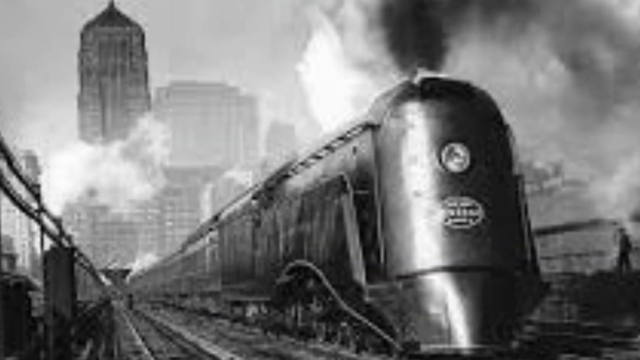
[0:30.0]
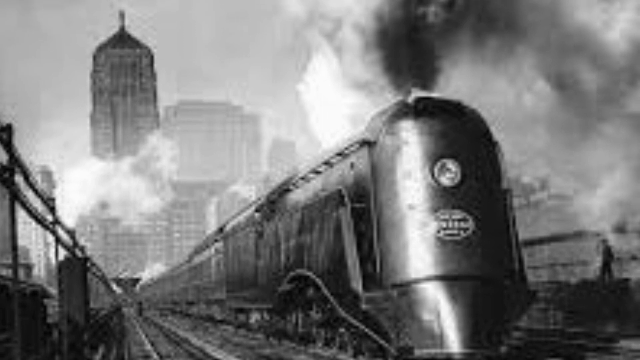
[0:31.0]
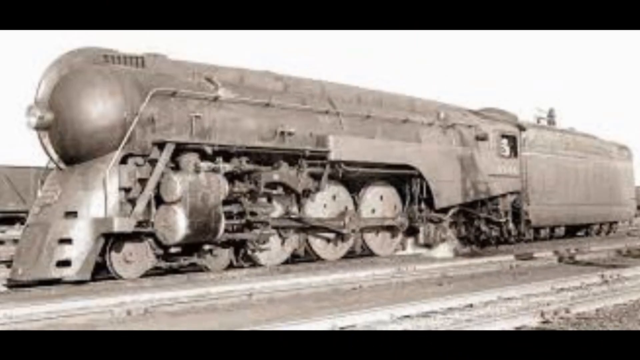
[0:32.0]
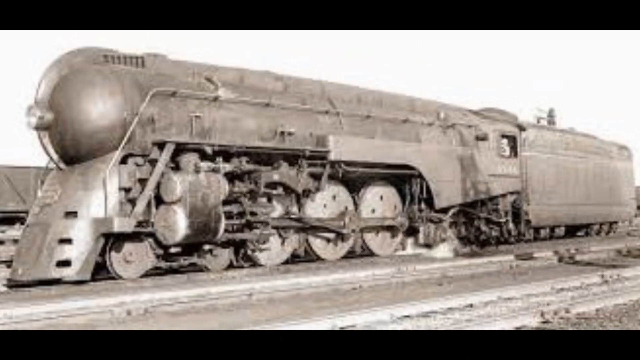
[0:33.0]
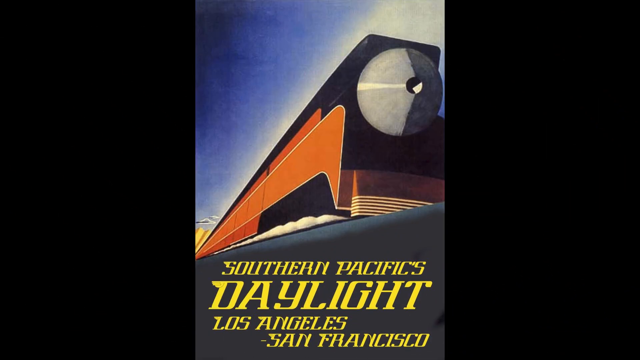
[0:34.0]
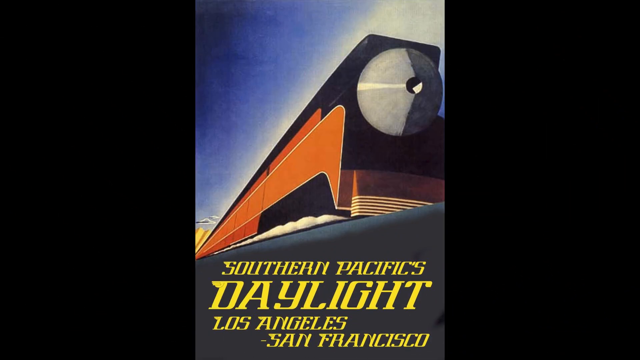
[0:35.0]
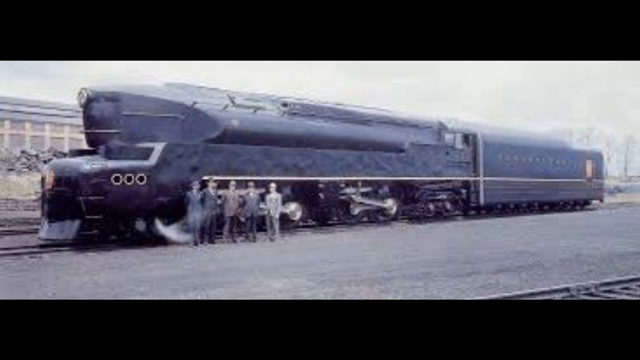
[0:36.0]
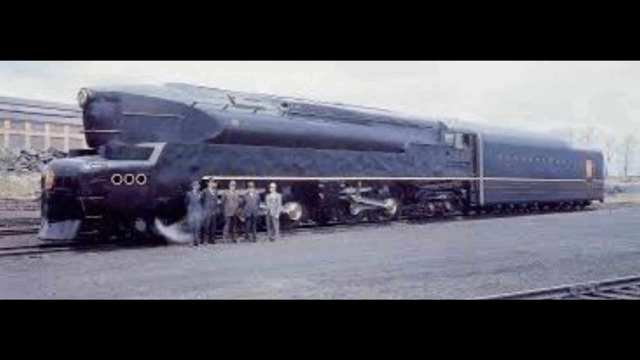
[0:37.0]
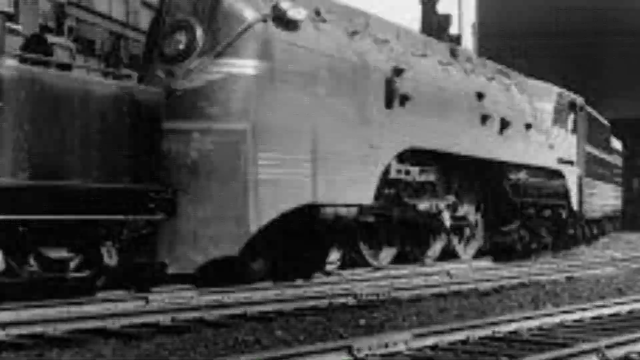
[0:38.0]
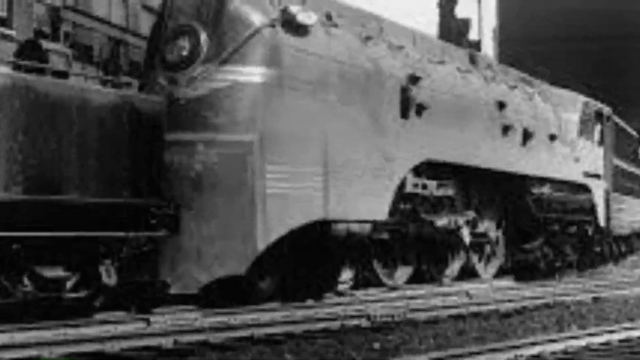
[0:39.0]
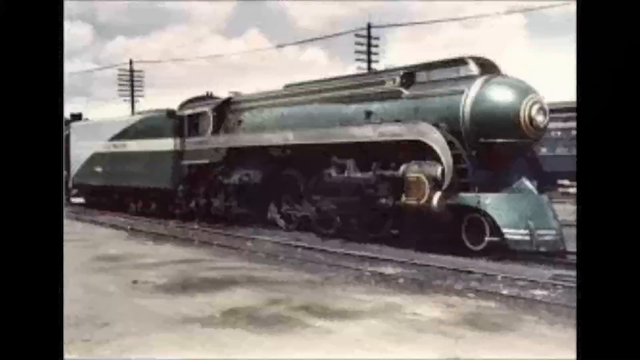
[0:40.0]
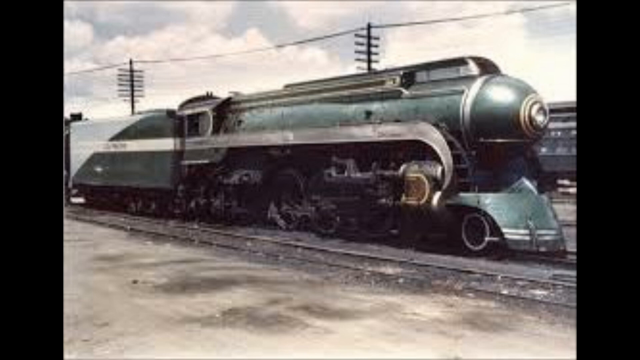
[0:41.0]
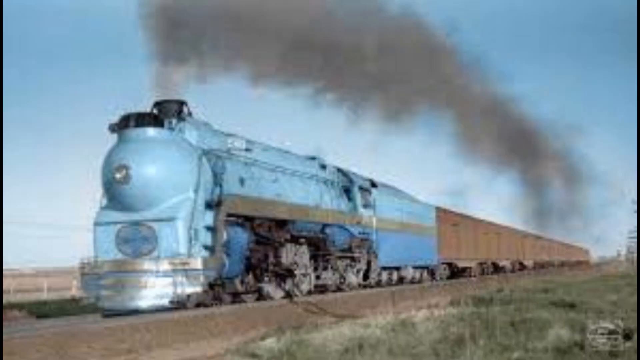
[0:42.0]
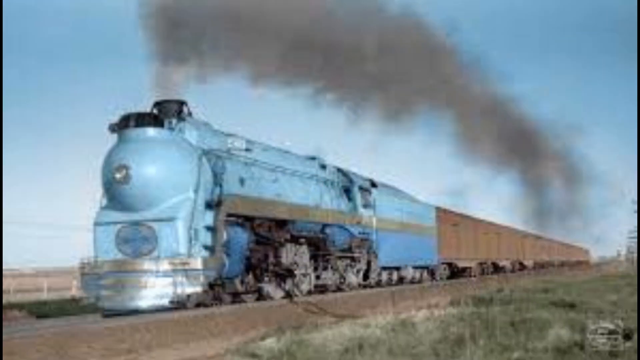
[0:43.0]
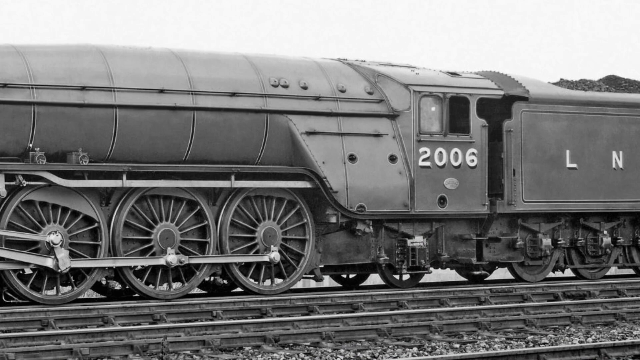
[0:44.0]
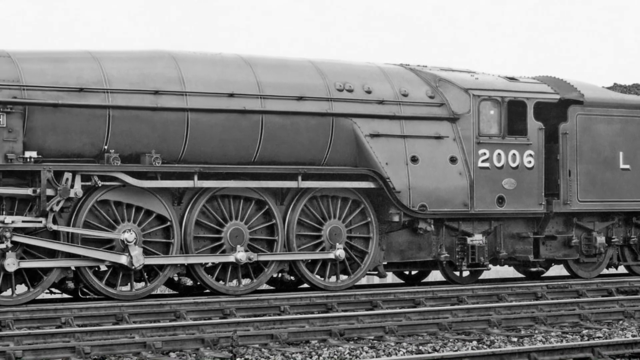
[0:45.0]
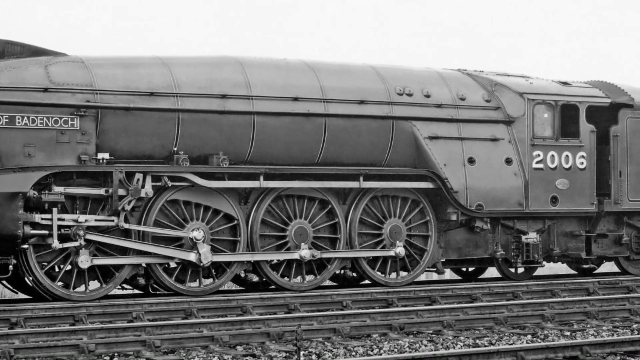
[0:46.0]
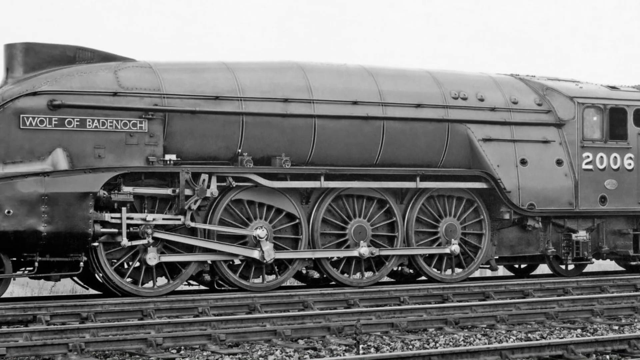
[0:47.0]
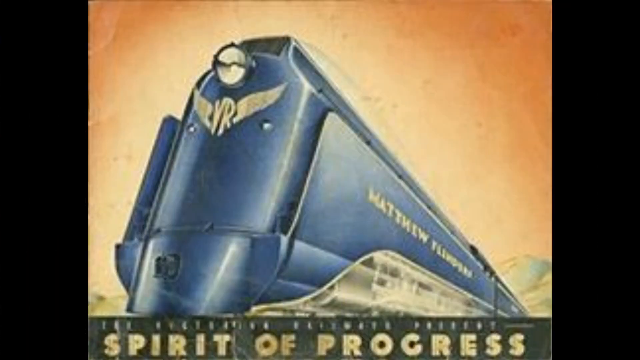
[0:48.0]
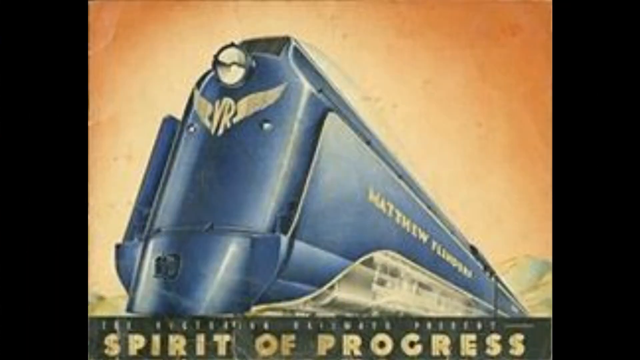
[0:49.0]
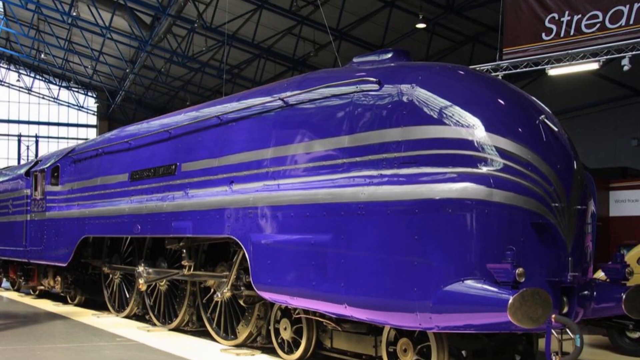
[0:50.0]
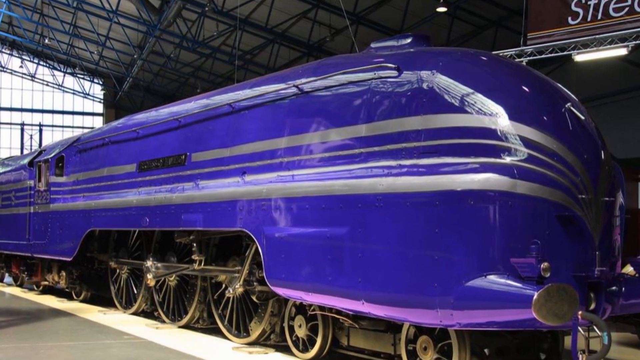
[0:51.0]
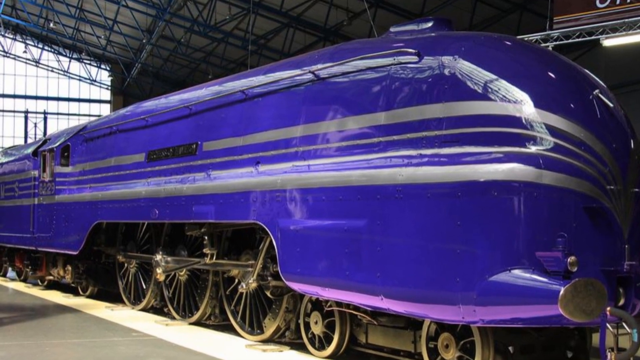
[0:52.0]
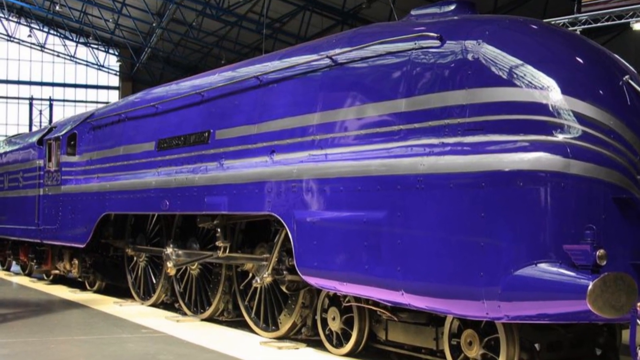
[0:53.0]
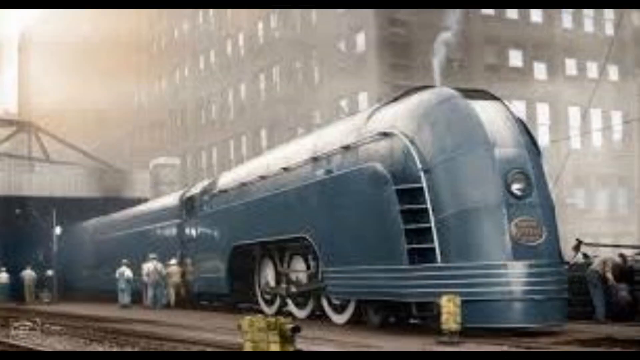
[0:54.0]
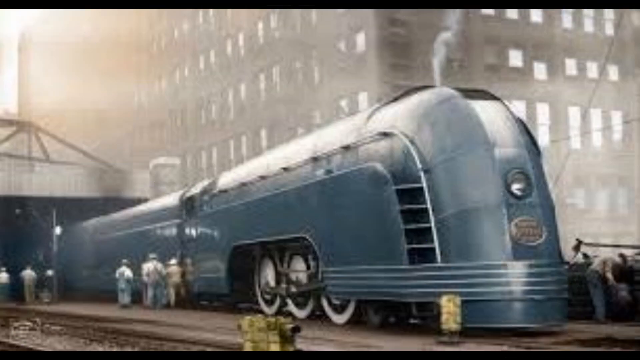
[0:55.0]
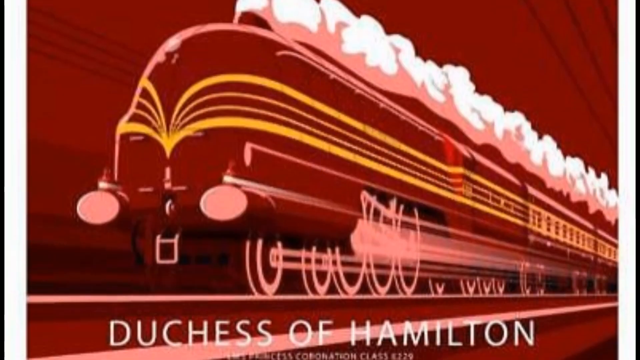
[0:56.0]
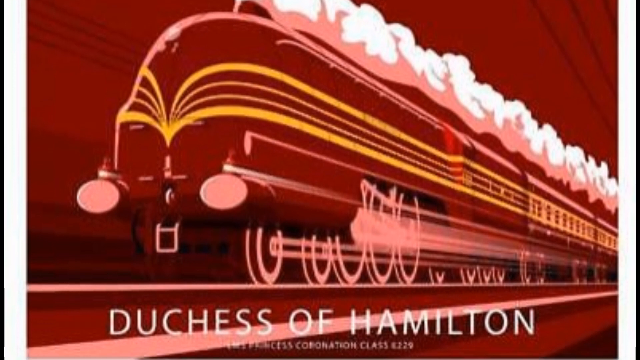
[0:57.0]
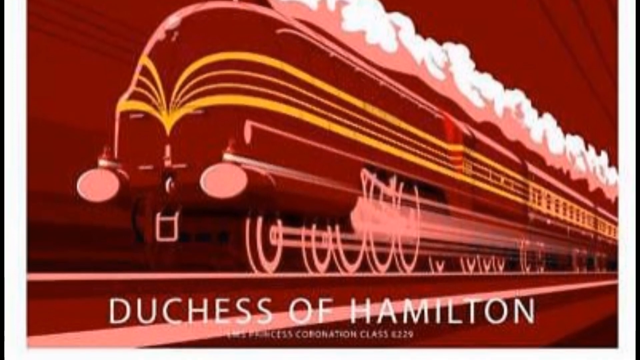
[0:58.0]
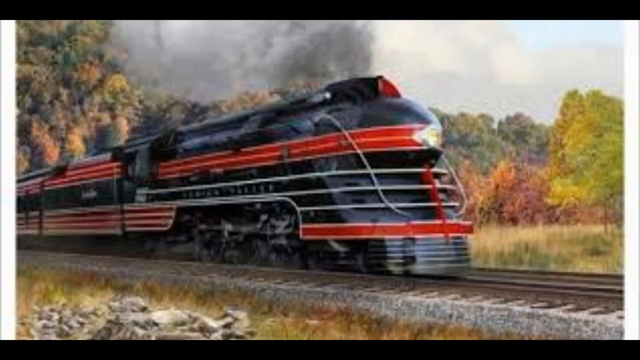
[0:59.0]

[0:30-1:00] A black and white image of a steam train, possibly a drawing, shows lots of smoke in white, grey and black, skyscrapers in the background, and a sheen on the train. A cut leads to a black and white photograph of a steam train, then a somewhat abstract painting reminiscent of Russian paintings from the 1910s and 20s, with text that reads "southern pacifics, daylight, Los Angeles". Next is a photograph of what looks like a bullet-type train, possibly a steam train, with five men standing around it outside. Another image of a steam train is a low-contrast, almost monochromatic colour image in which the train is apparently light green. A blue steam train follows with lots of carriages behind it, perhaps delivering something. A black and white image of a steam train shows the number 2006 and the words "the wolf of Badernoch" on it. Another steam train has the symbols "VR" on the front and the name "Matthew" just visible on the side, with the surname not visible. Next is what looks like a very modern steam train with a shine to it and gold and black wheels, and then apparently the same train in what looks like an older photograph. A painting with the text "Duchess of Hamilton" is very red, with a red background the same colour as the train and lots of white smoke. Then comes what looks like a realistic painting of a black, red and white train.